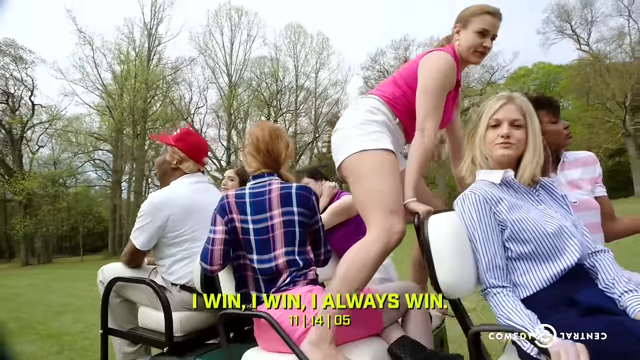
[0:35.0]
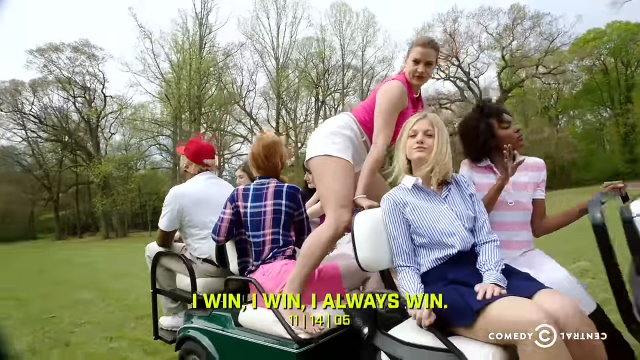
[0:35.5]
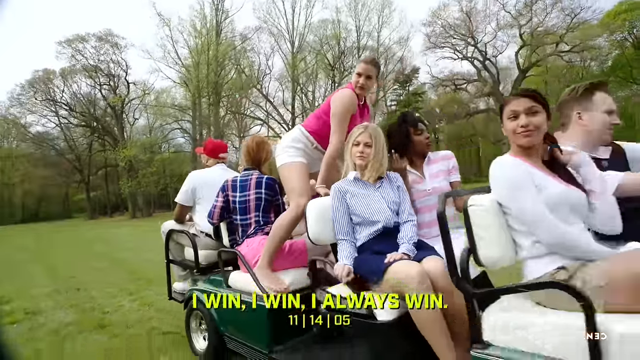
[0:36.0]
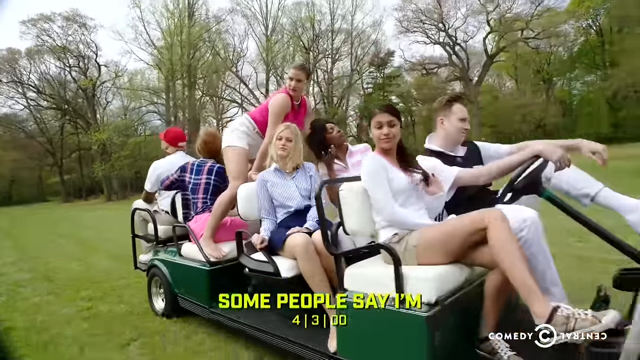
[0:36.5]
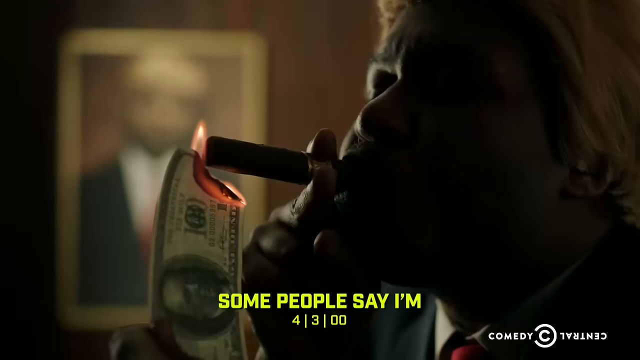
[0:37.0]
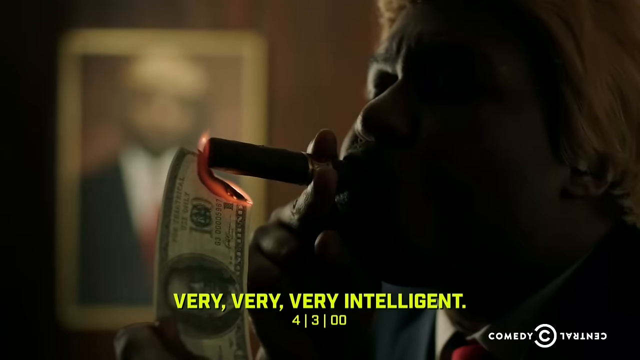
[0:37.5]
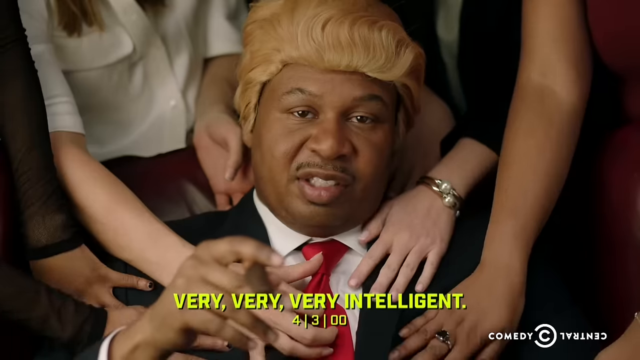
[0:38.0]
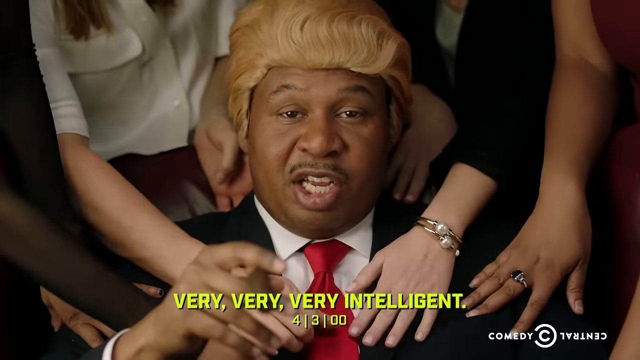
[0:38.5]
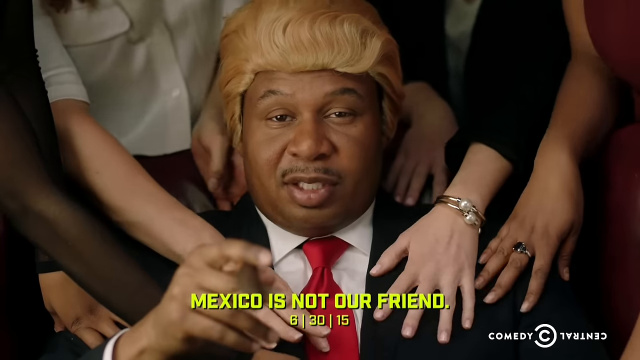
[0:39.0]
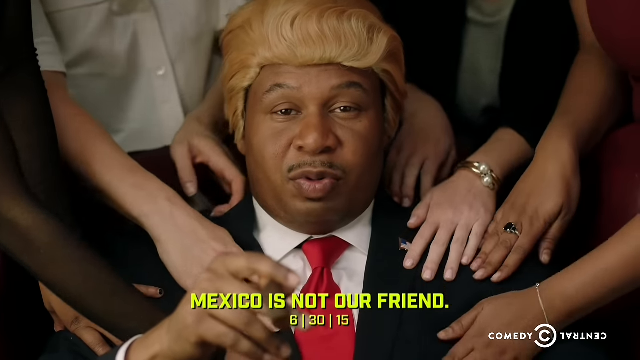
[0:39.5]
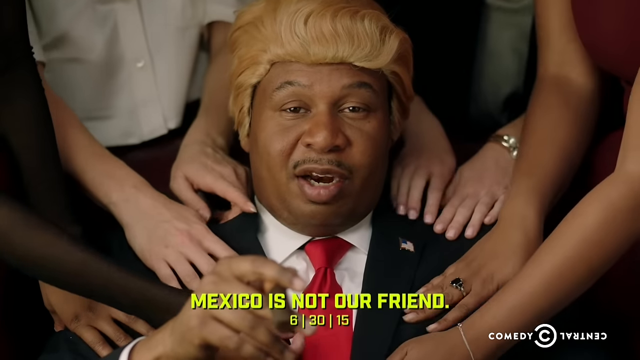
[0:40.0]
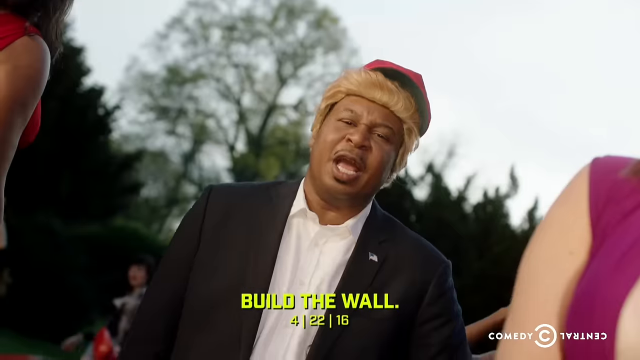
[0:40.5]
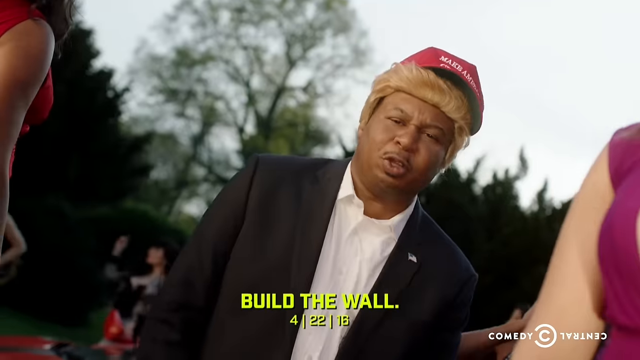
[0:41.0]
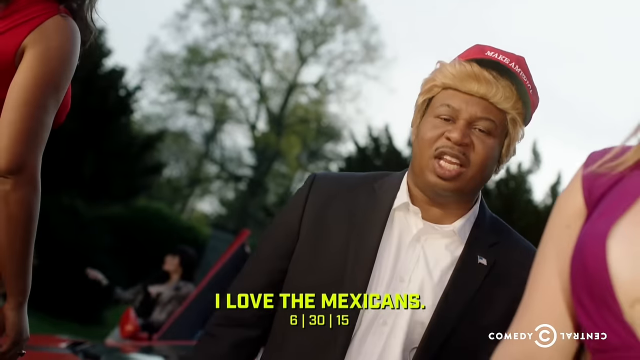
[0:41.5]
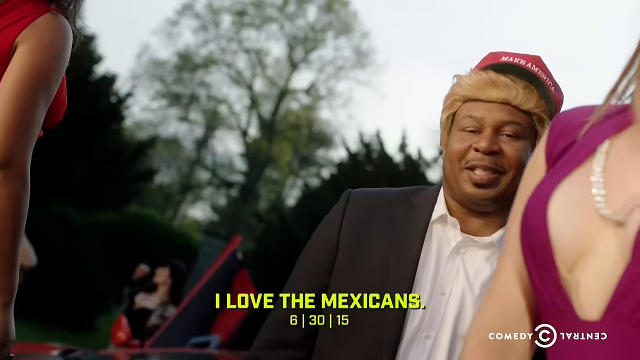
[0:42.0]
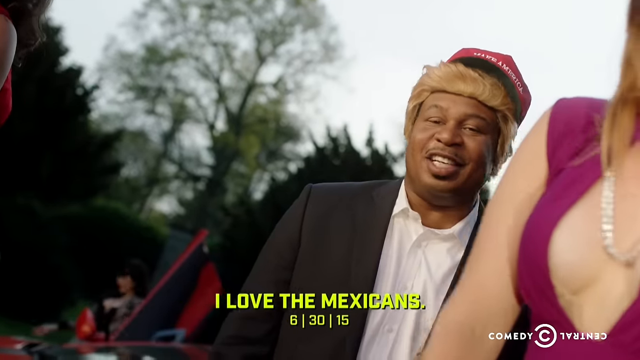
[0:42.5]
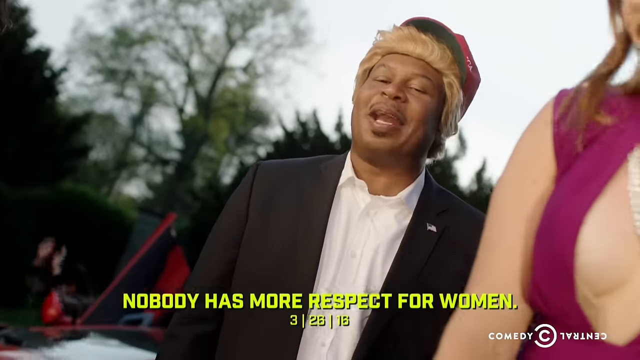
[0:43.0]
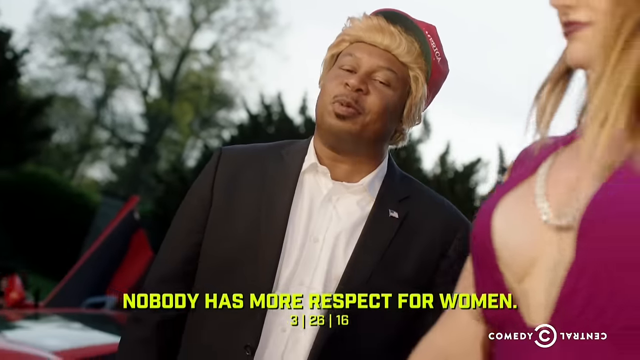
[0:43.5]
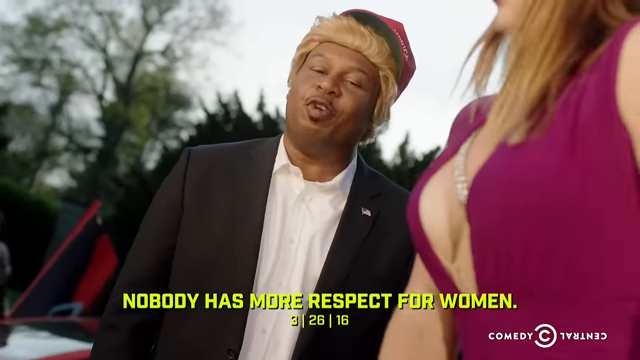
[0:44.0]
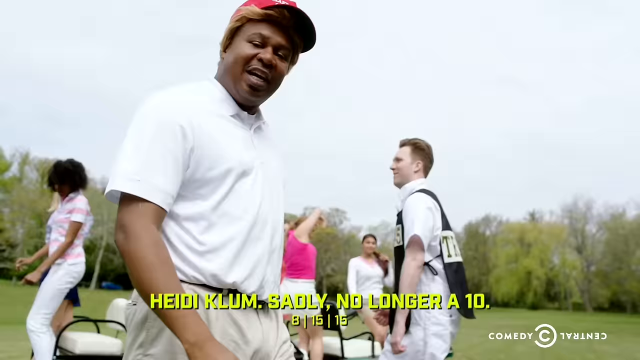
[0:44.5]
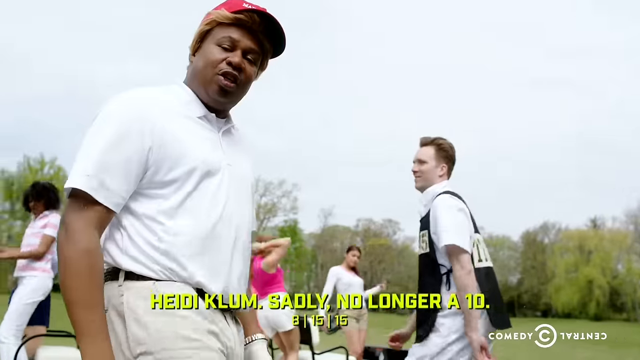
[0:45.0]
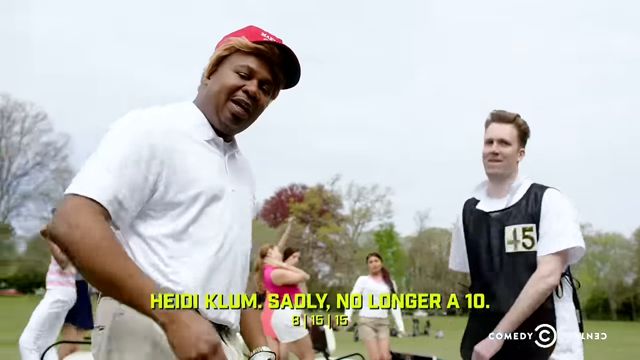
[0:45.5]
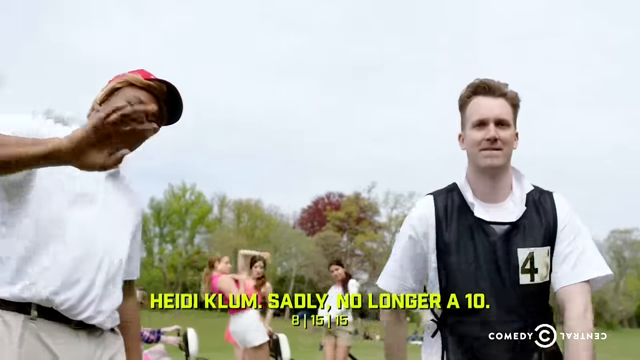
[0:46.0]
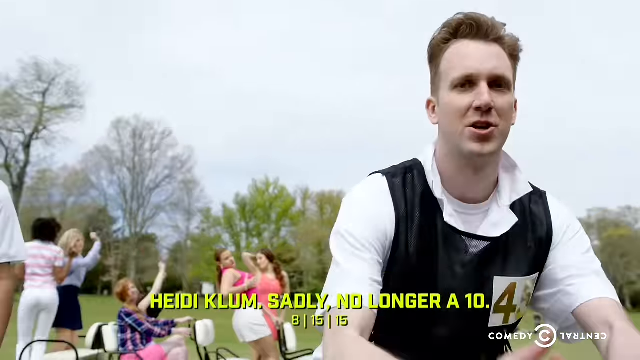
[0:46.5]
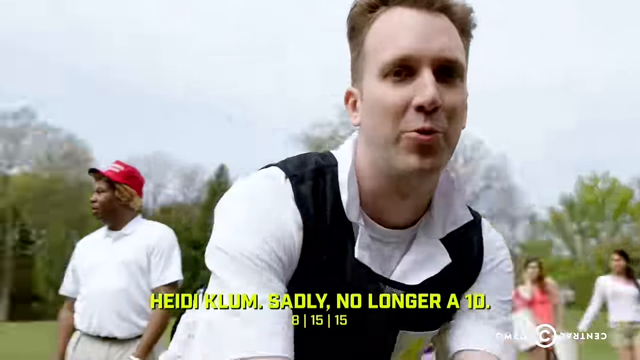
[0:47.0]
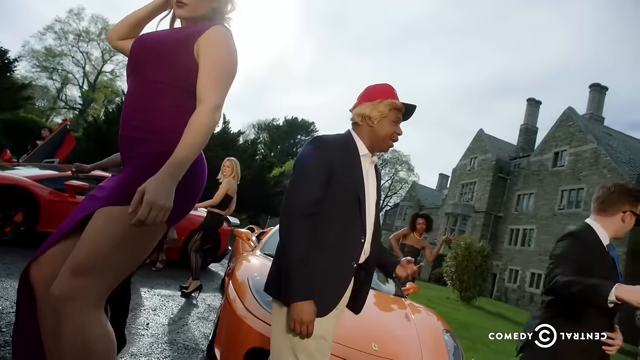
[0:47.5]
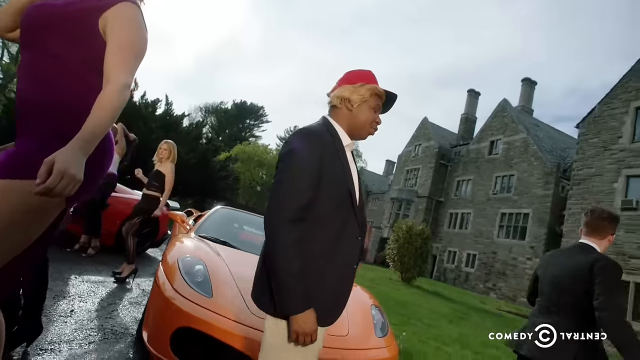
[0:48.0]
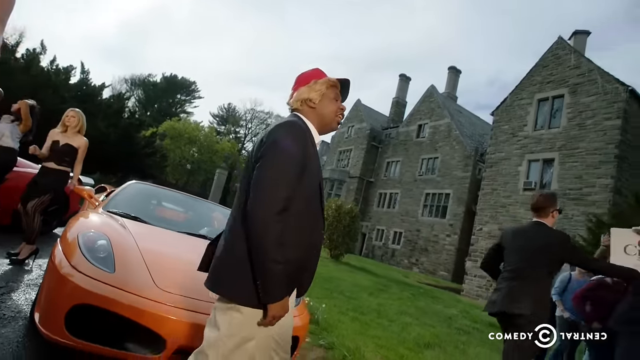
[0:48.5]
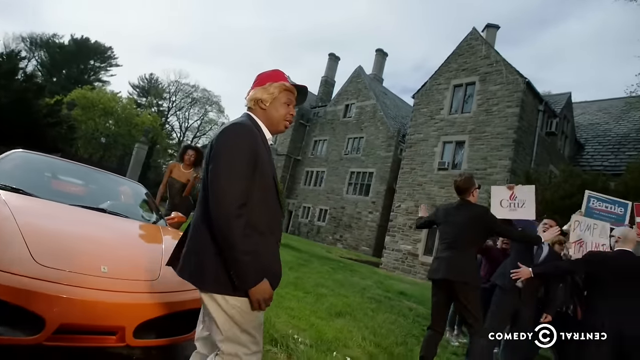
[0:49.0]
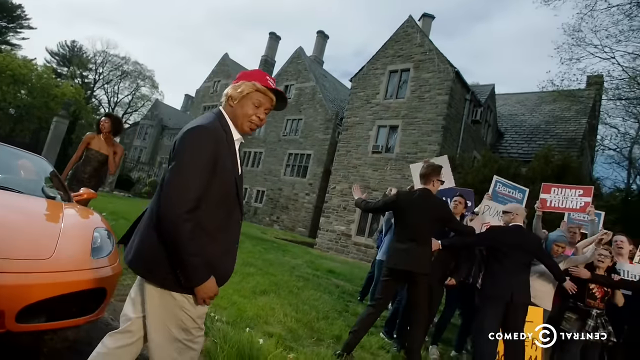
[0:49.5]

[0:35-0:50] A silhouette of Black Donald Trump smoking a cigar appears, with what appears to be currency used as the igniter as it starts to burn. In another scene, women's arms rub against Black Donald Trump as he is sitting down; the women themselves are not visible, only several arms caressing his chest area. He appears to be seen next in the open of the forest and at the brick mansion as he continues his rap. Several women dance around him; their faces are not visible, but their shoulders, waists and dresses are. The dresses tend to be bold colors, some purple and violet, as well as black and blue. The last scene shows Donald Trump walking with what appears to be his bodyguard toward a group of fans holding several signs, who are held back by what appears to be a chain-link fence. The crowd includes men and women holding several different types of posters that show support.